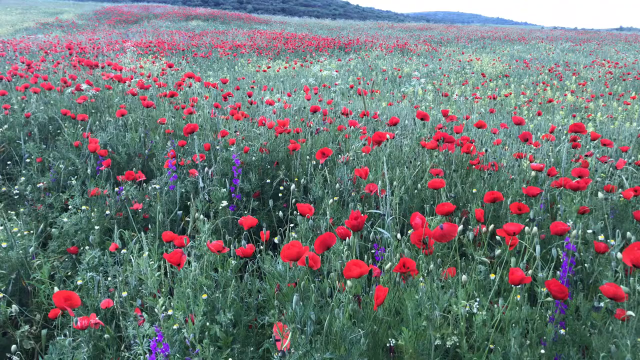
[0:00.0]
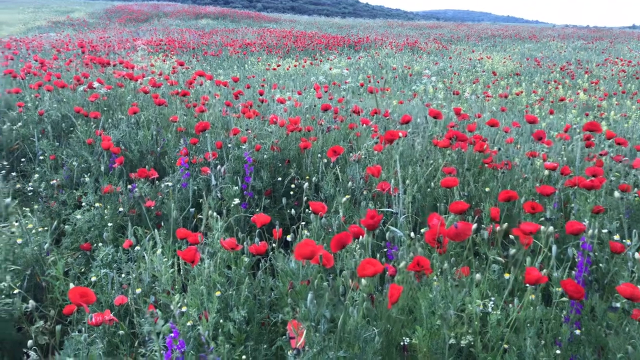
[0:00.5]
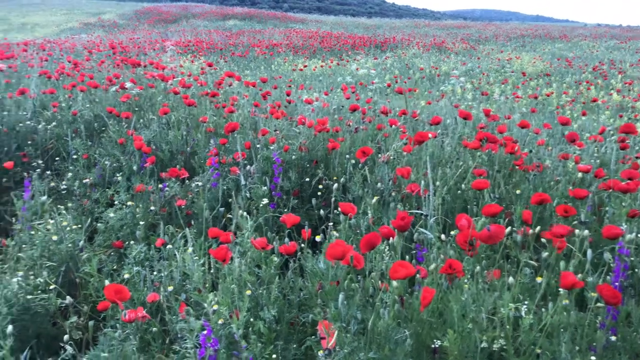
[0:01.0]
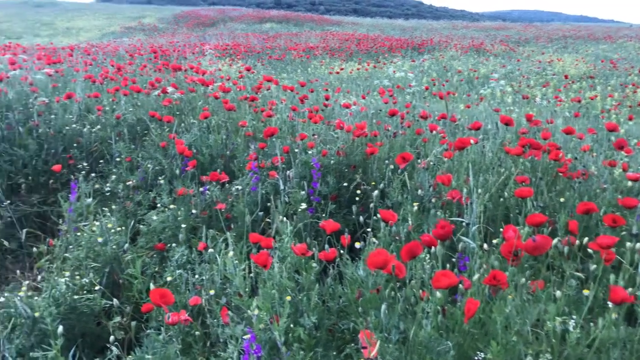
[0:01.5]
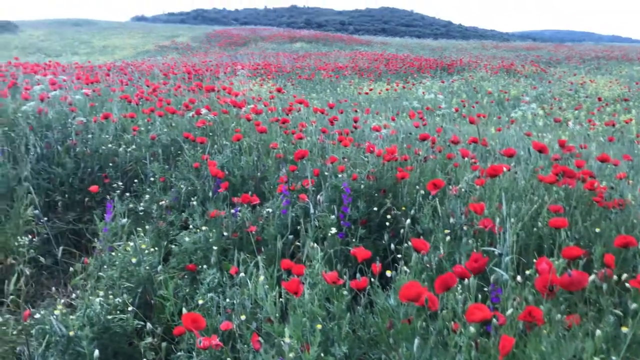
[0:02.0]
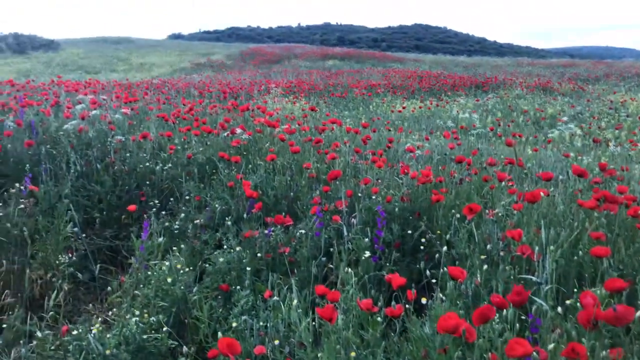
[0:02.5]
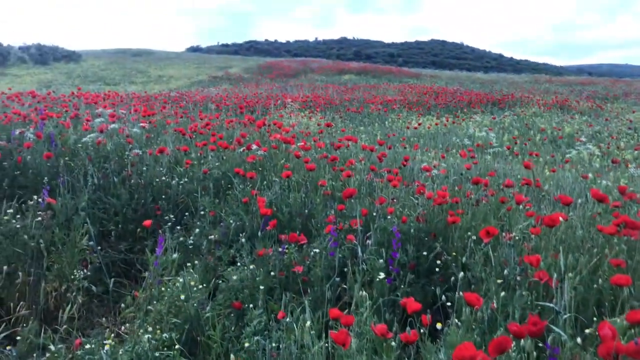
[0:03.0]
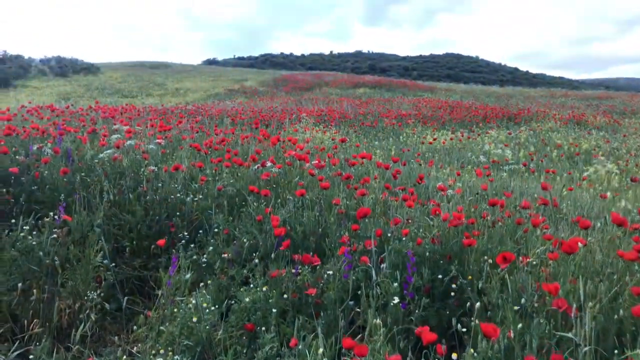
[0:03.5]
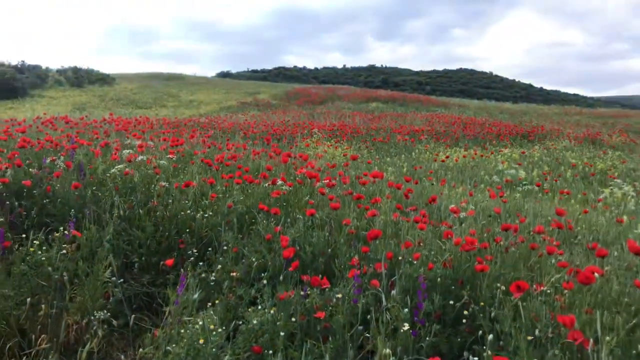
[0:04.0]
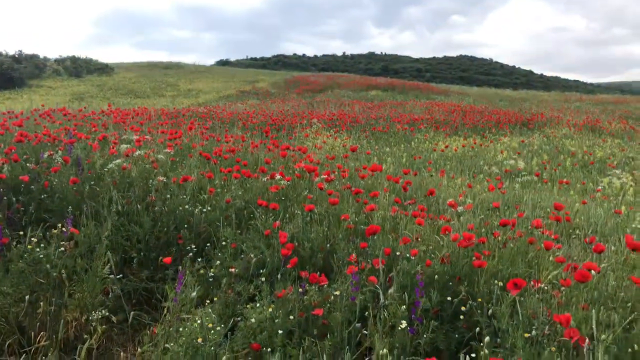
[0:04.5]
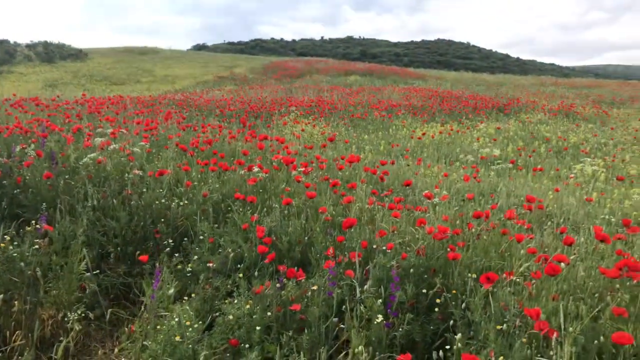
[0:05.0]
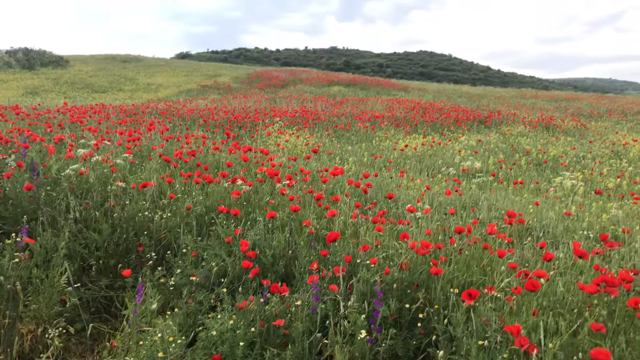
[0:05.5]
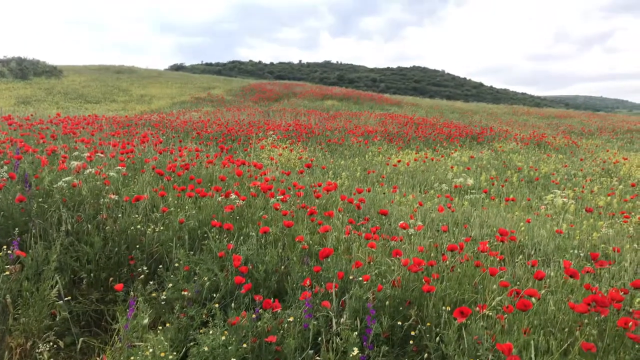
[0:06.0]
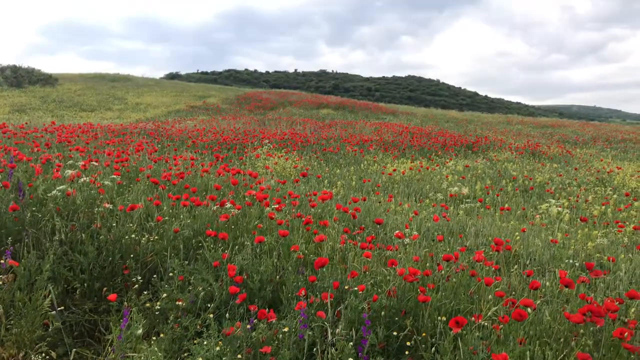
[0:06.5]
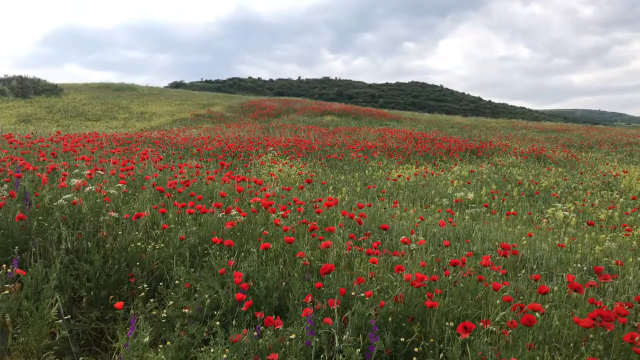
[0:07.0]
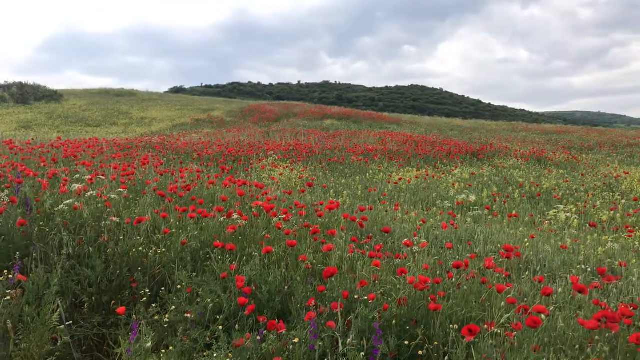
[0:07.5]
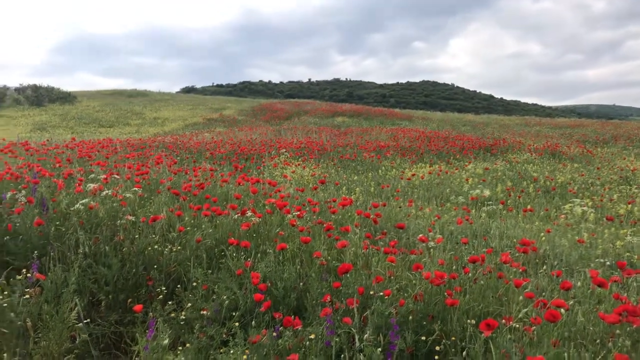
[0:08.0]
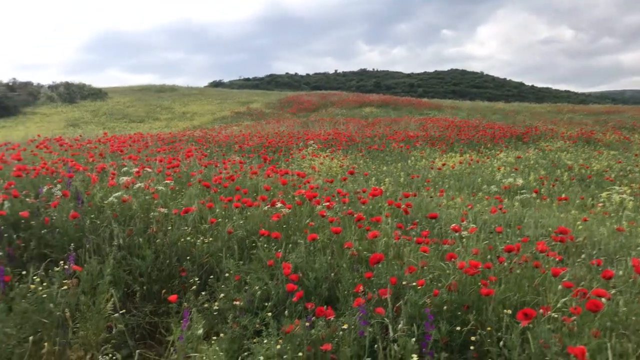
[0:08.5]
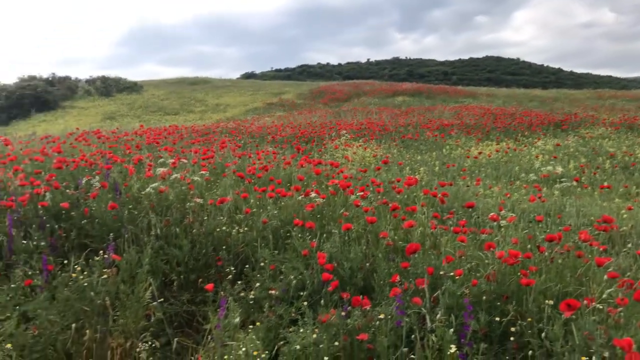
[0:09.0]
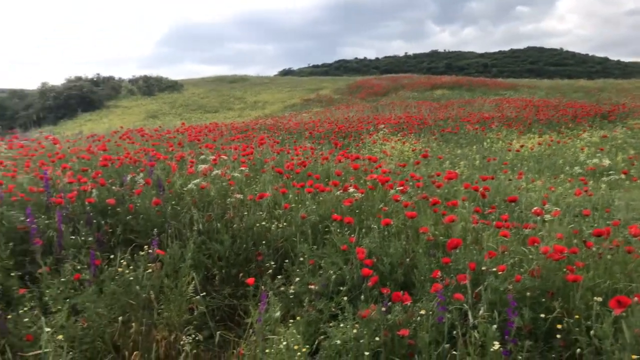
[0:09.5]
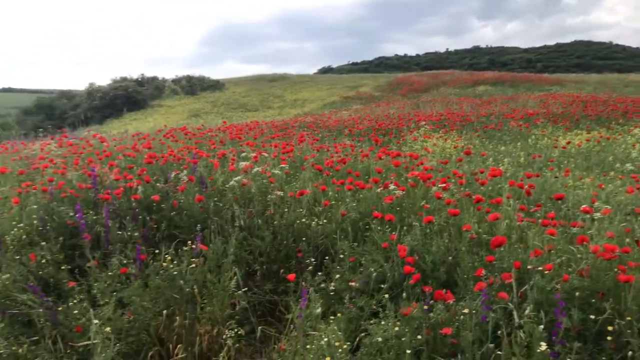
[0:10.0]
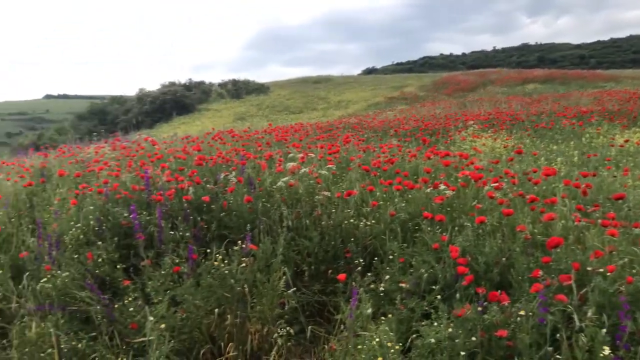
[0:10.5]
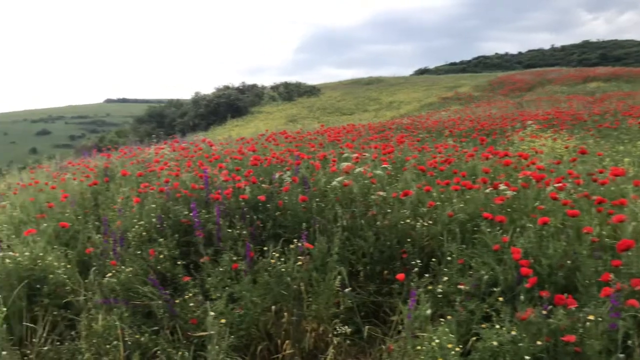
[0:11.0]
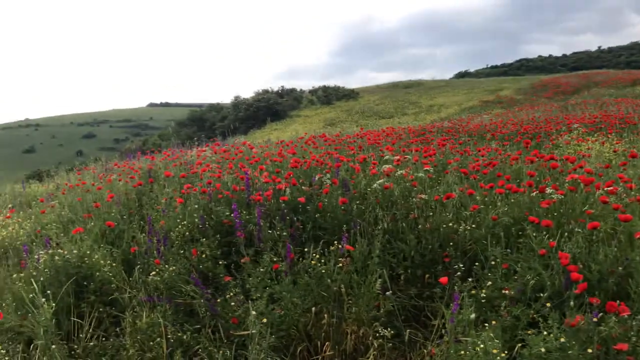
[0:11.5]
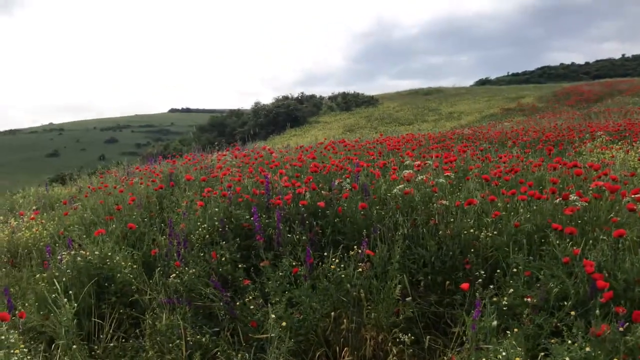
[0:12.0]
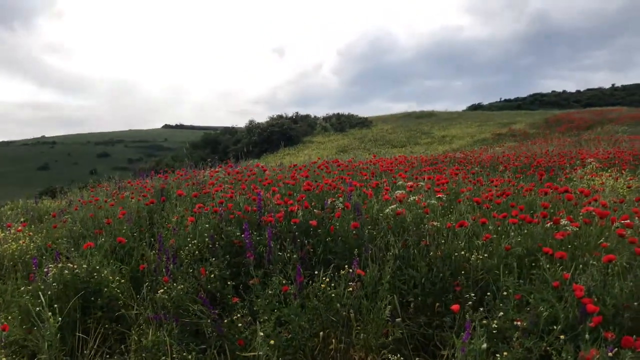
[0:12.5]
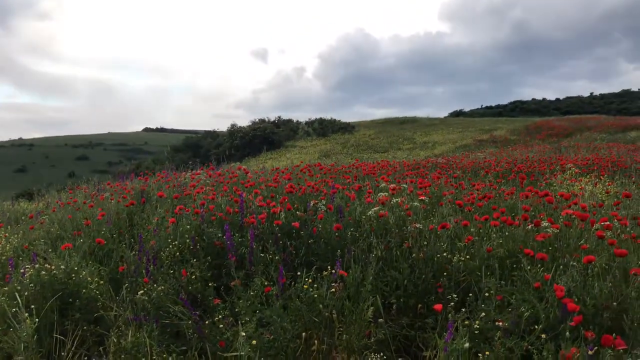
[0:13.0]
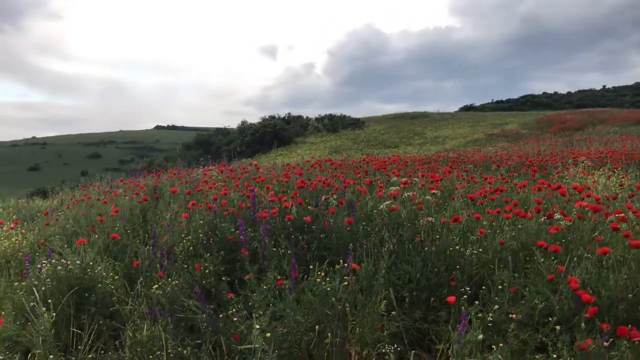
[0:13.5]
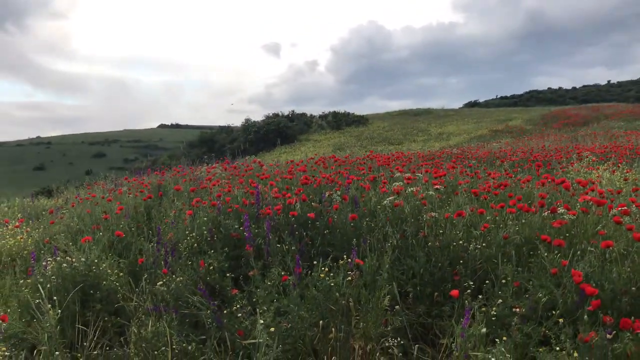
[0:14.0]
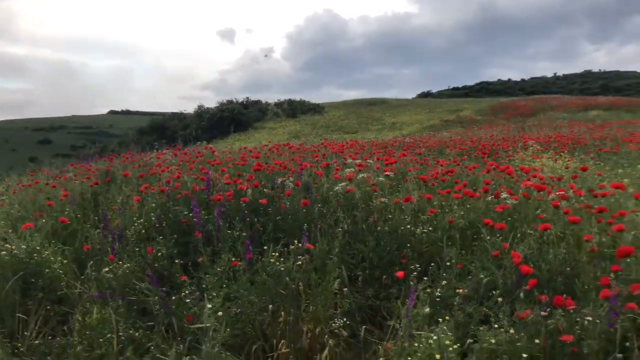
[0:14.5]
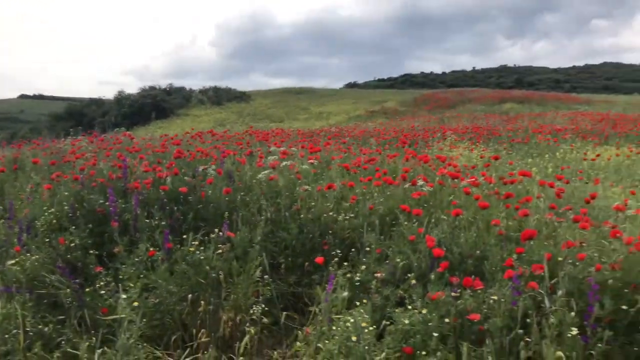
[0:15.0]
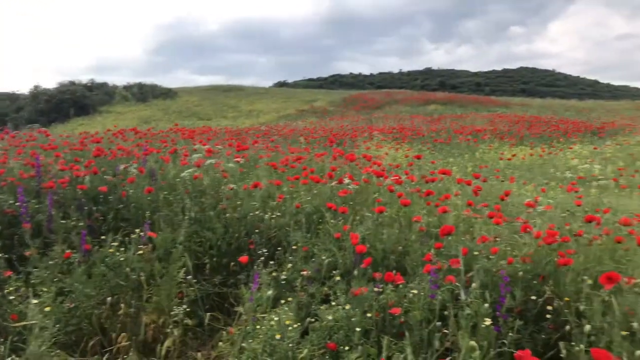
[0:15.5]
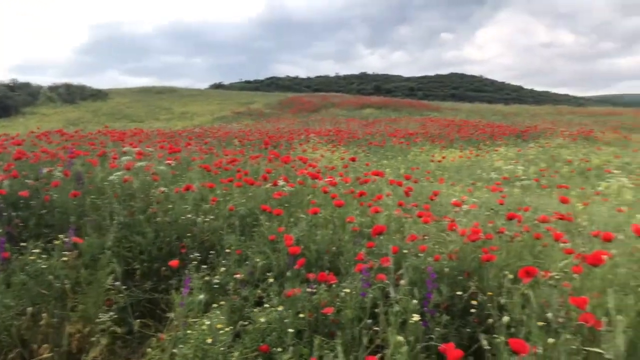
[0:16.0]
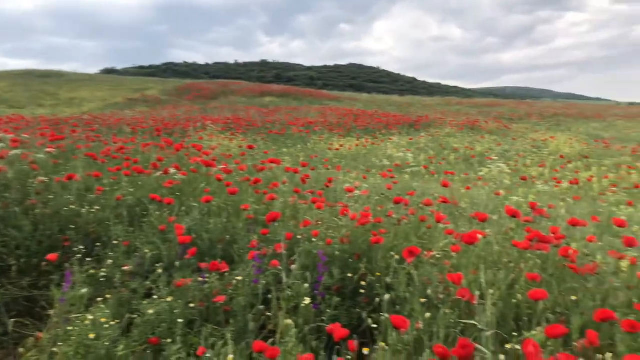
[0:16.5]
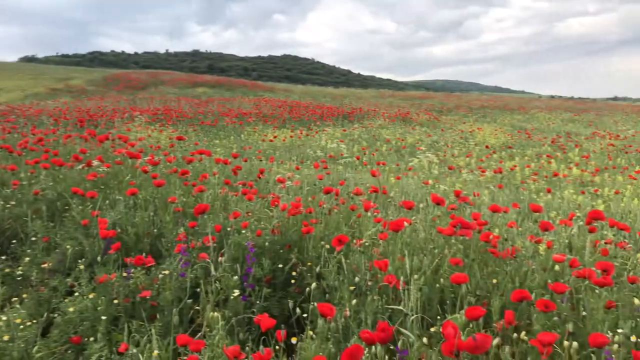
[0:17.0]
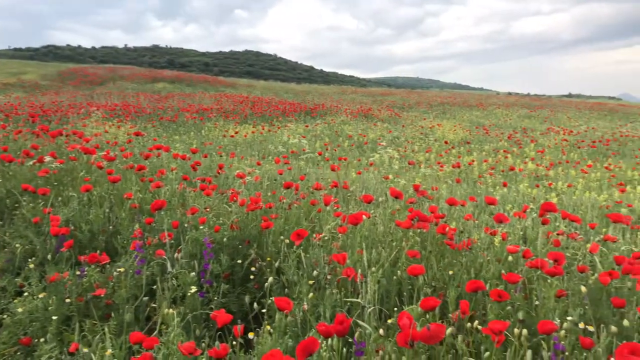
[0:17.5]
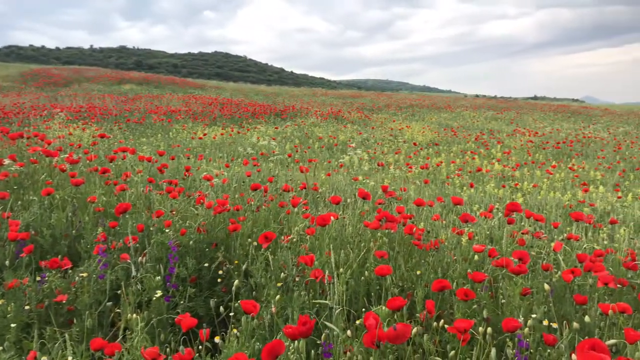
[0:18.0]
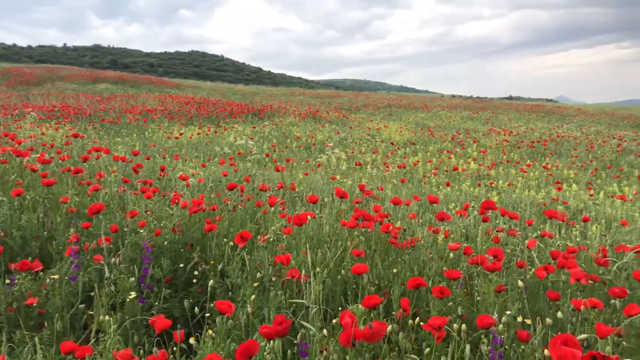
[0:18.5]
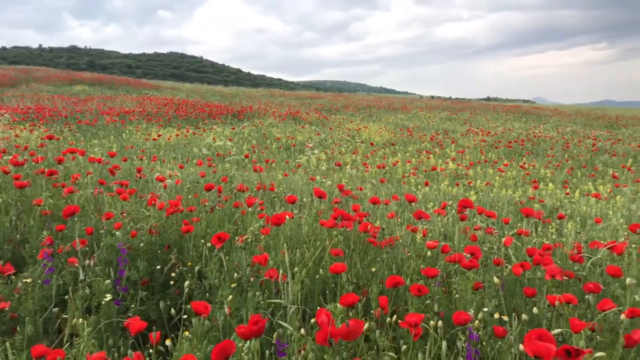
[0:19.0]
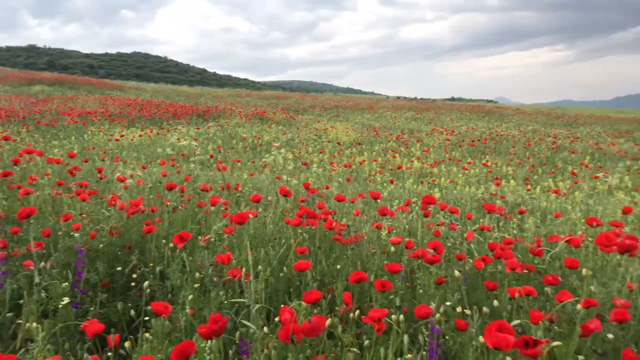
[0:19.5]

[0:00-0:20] A field of red poppies fills the view, with a few little purple flowers and some tiny white flowers mixed in throughout. Off to the left there is just grass, a perfectly manicured field that stretches as far as the eye can see in that direction, which suggests someone is cultivating the poppies. Hills with green grass and foliage are in the background. As the camera pans, the area to the left is field or lawn, while to the right the field of poppies goes on endlessly. Nothing else shows in the background besides some hills. The day looks overcast, with a kind of white sky and not really any sun.